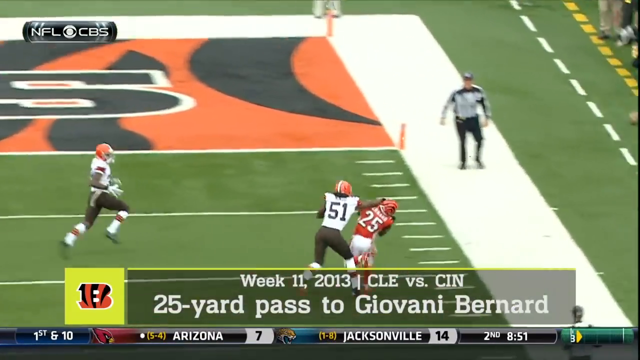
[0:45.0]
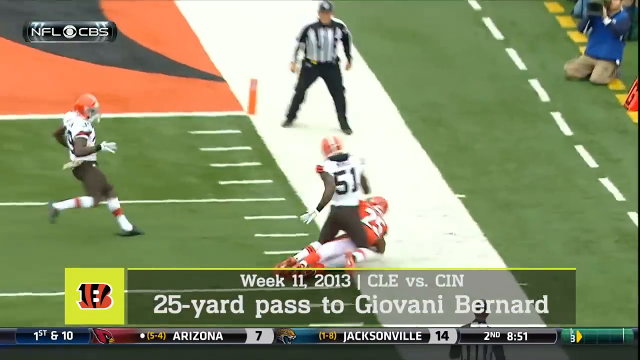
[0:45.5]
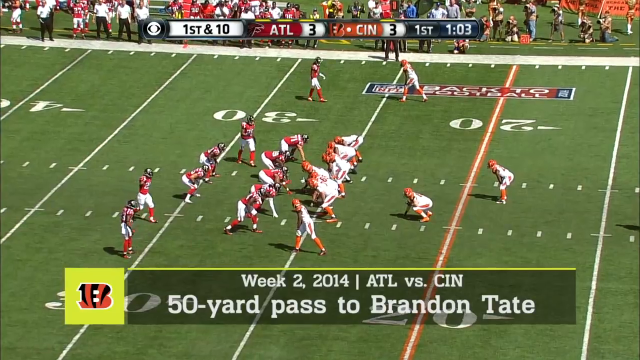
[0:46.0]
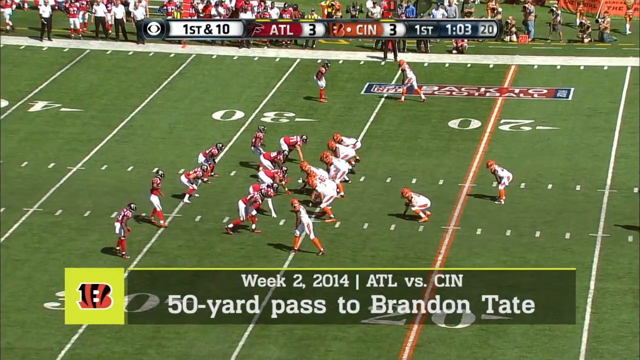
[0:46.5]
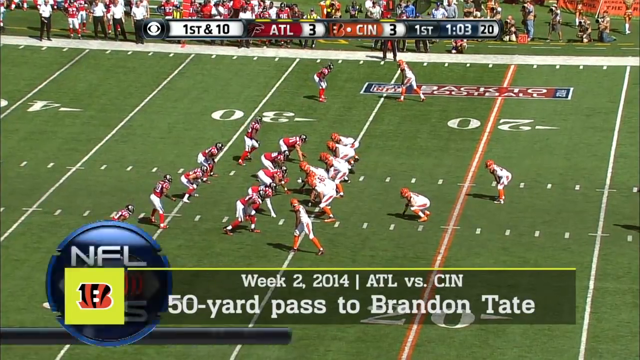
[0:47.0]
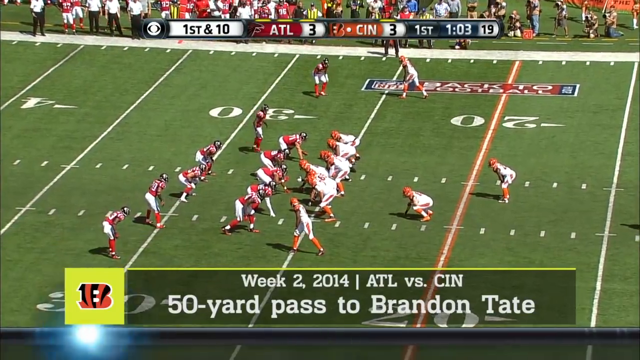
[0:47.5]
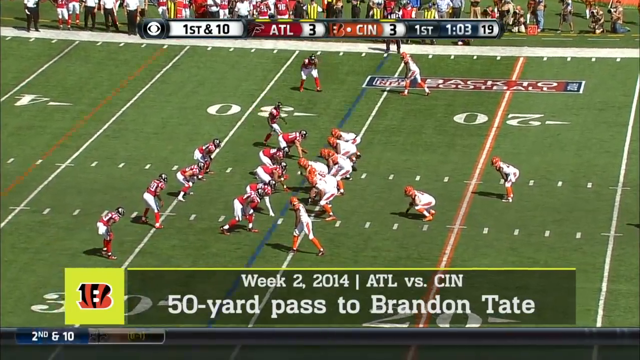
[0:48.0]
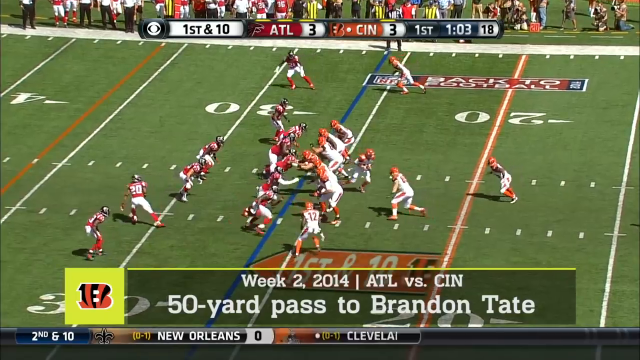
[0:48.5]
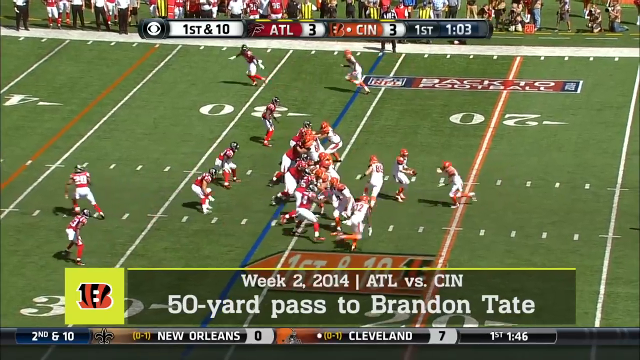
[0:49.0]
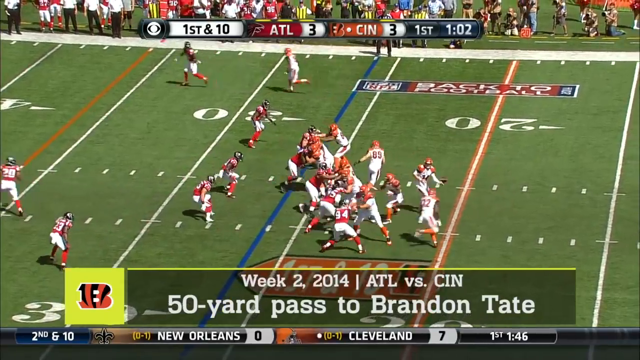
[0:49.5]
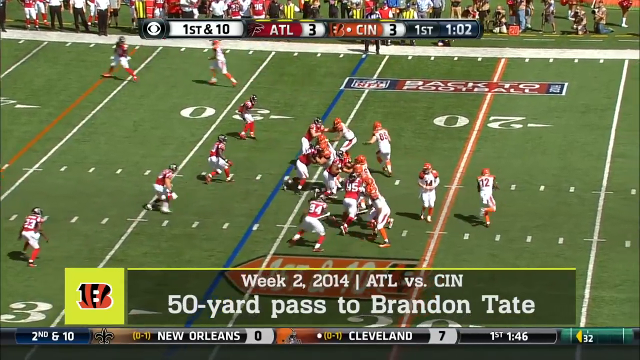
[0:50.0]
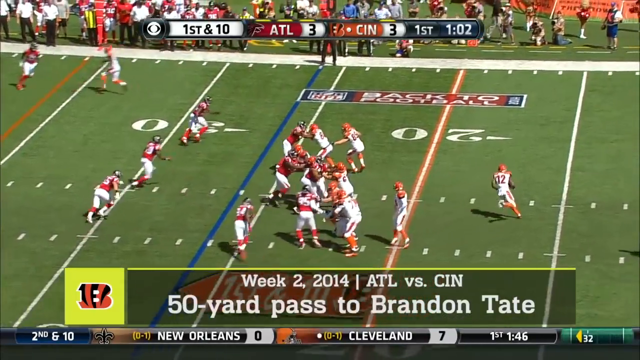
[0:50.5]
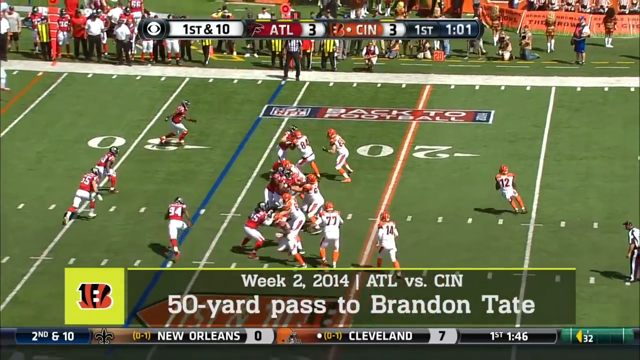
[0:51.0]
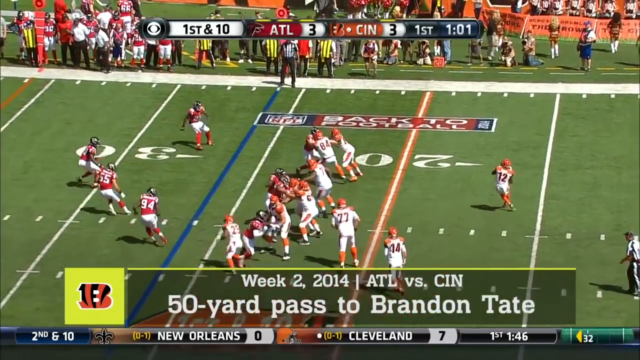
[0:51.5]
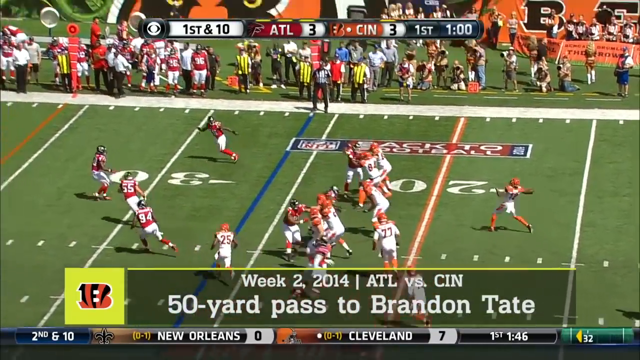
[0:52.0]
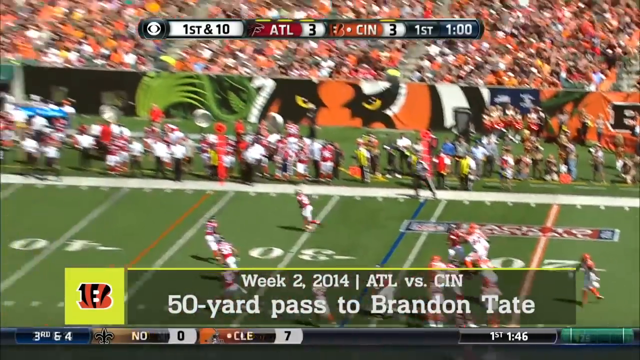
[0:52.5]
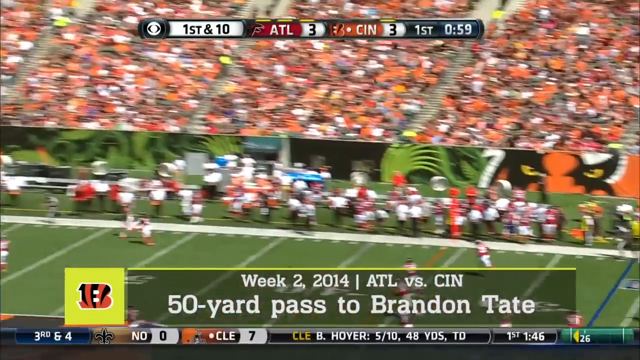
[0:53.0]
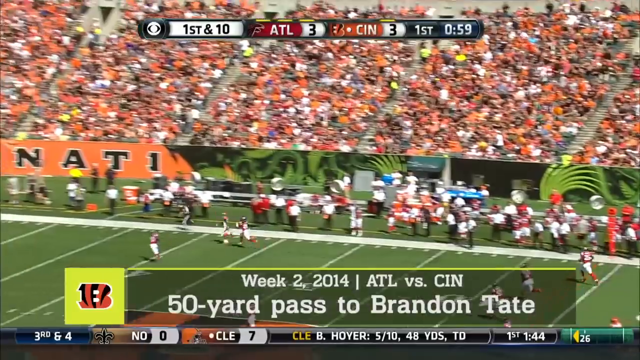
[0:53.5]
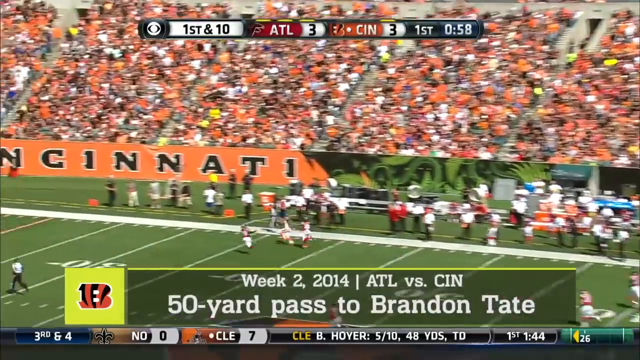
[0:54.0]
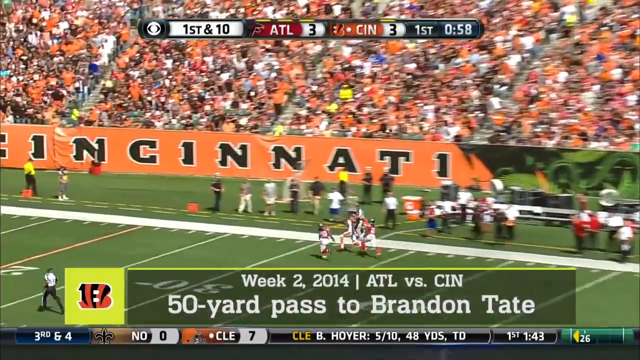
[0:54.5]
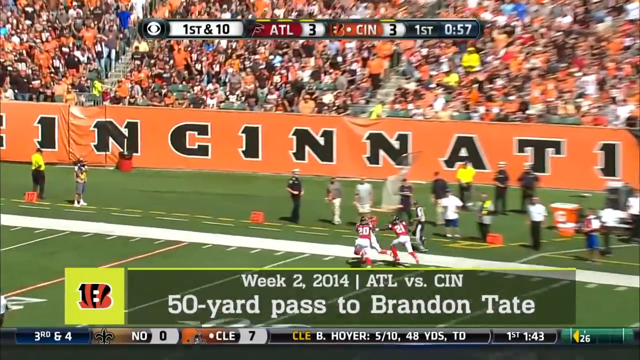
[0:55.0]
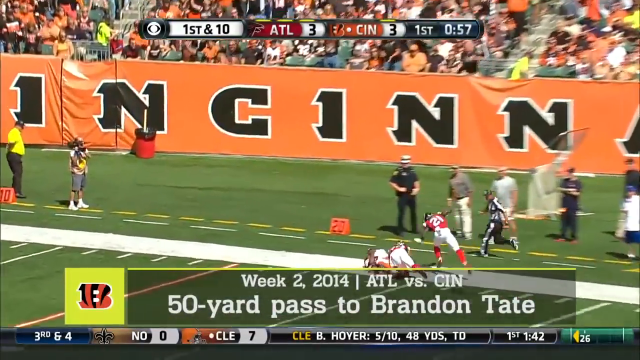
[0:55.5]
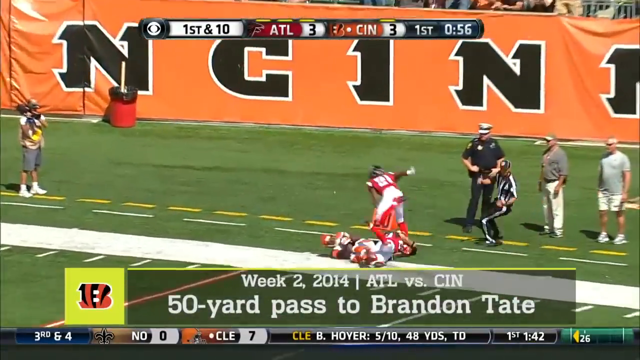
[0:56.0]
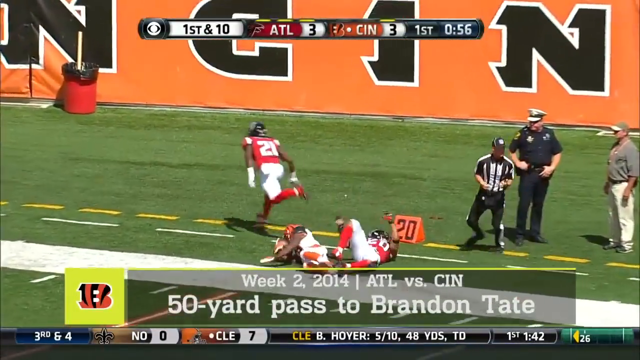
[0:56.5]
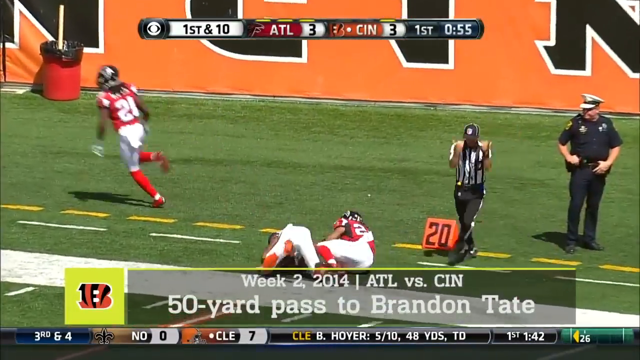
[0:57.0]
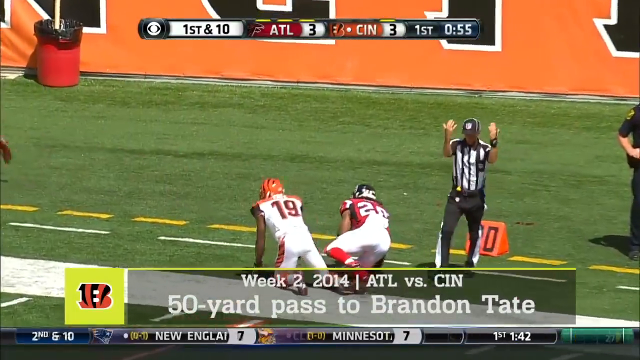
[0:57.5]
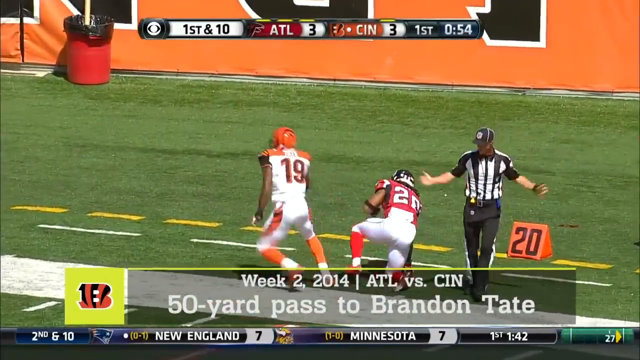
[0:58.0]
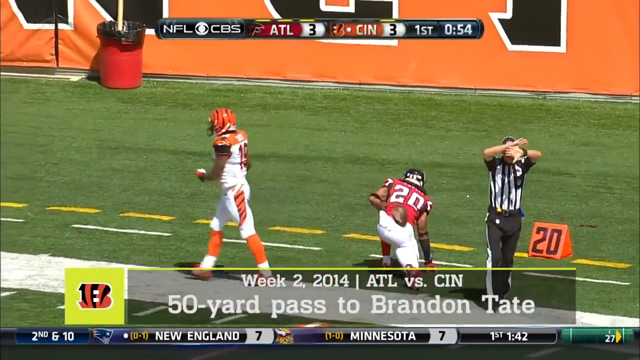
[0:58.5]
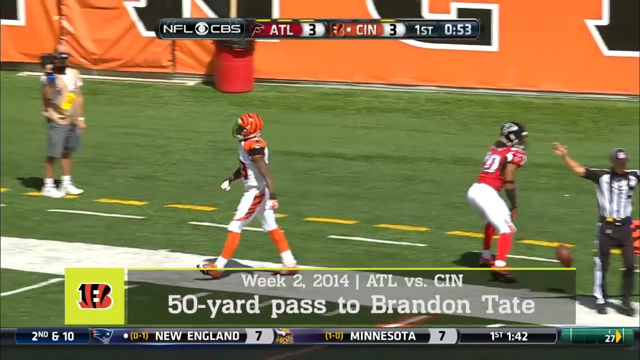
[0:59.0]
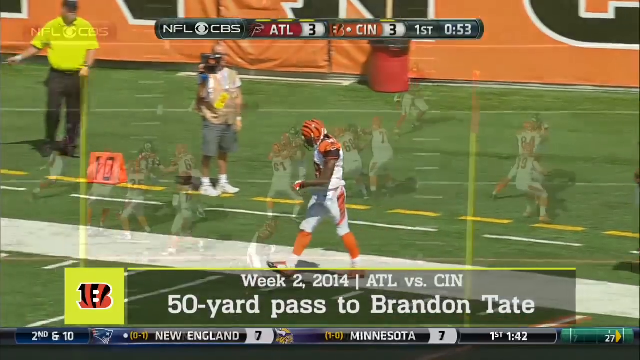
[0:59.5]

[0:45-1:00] A new play begins. A translucent banner at the bottom of the screen reads "Week 2, 2014, ATL vs. CIN. 50-yard pass to Brandon Tate". As the play is shown, a graphic adds blue and orange lines on the field to show where the players line up. The linebackers are attempting to hold other linebackers near an orange, white and orange line. A long pass is made. A replay shows the pass, which seems to be caught just out of bounds or very close to it. A referee on the field near the 20-yard line waves his arms to indicate his ruling. The player in the white uniform and orange helmet who attempted the catch gets up and walks away.